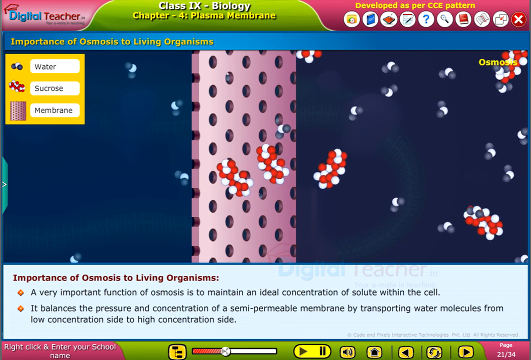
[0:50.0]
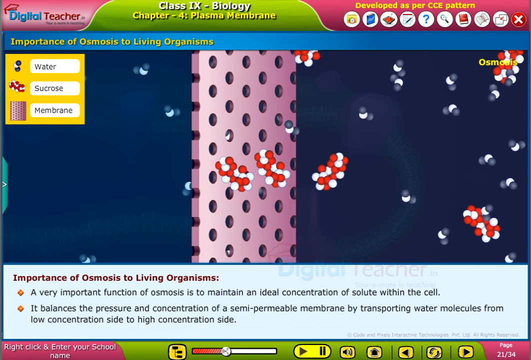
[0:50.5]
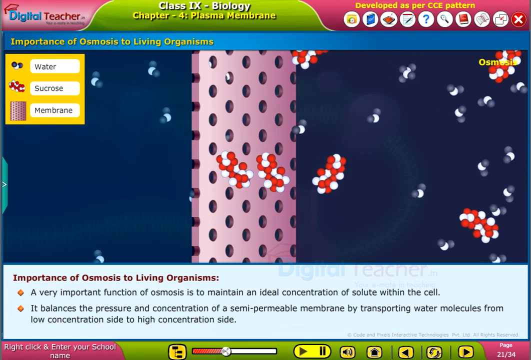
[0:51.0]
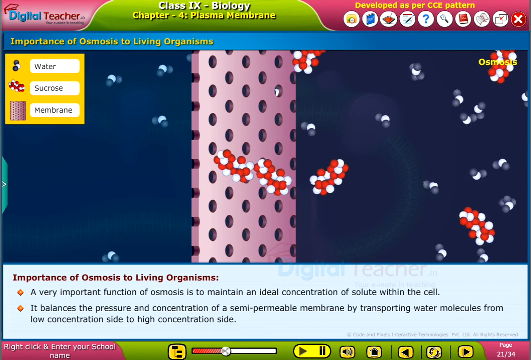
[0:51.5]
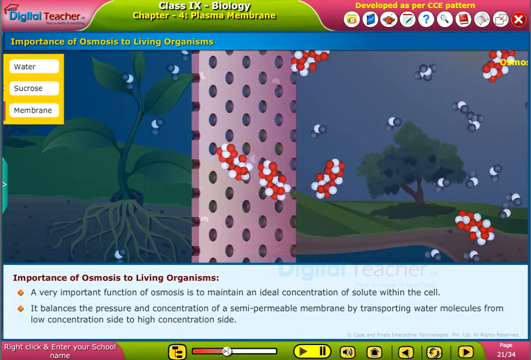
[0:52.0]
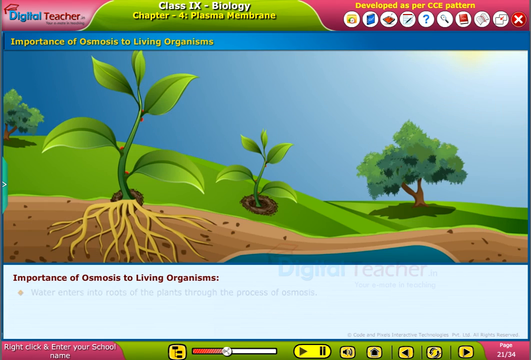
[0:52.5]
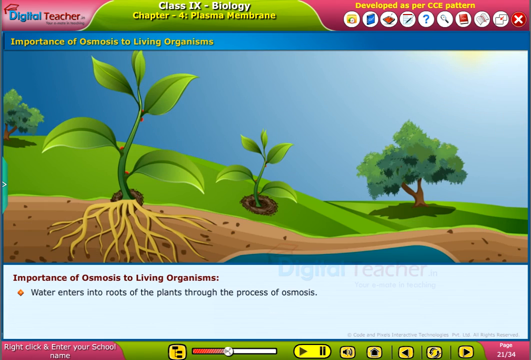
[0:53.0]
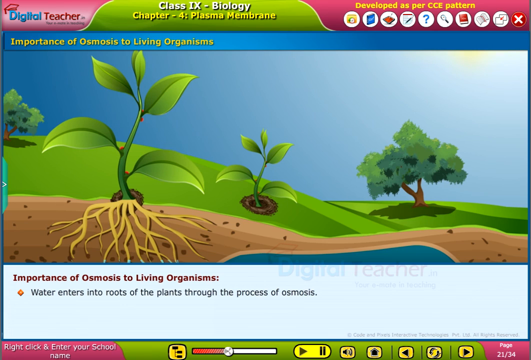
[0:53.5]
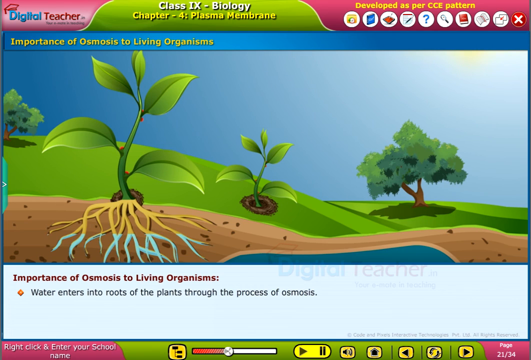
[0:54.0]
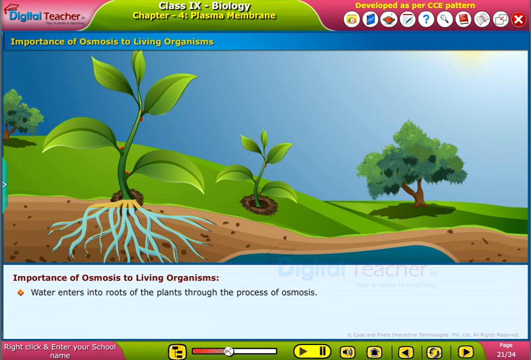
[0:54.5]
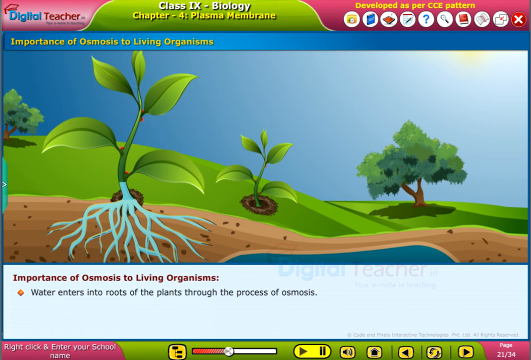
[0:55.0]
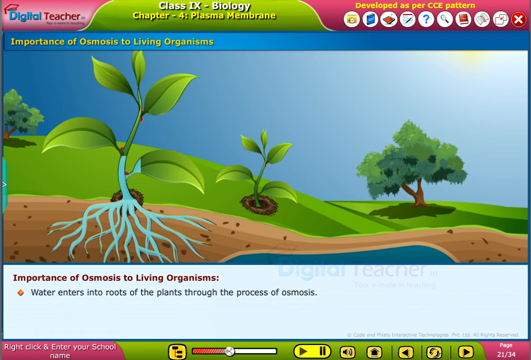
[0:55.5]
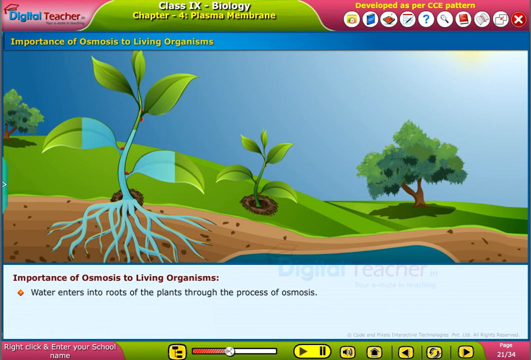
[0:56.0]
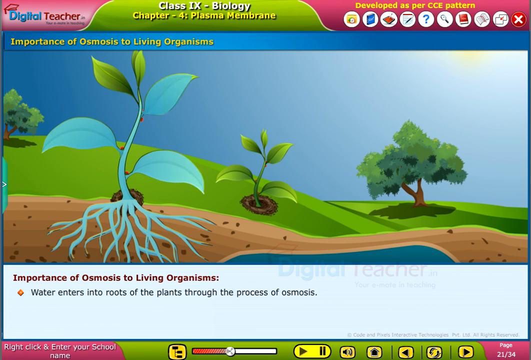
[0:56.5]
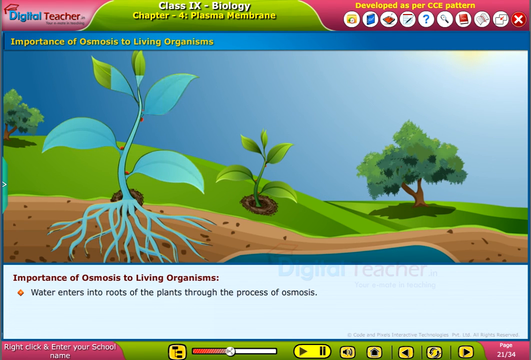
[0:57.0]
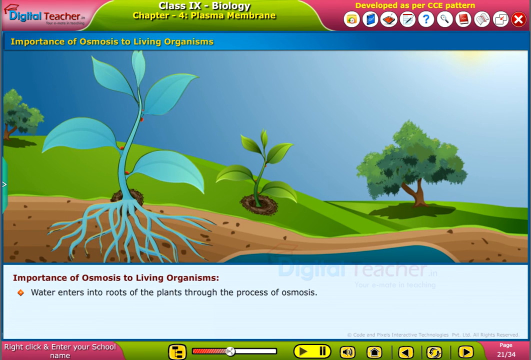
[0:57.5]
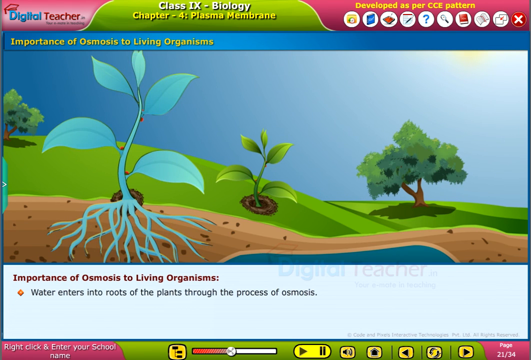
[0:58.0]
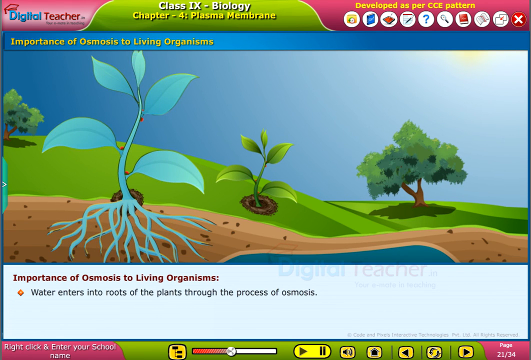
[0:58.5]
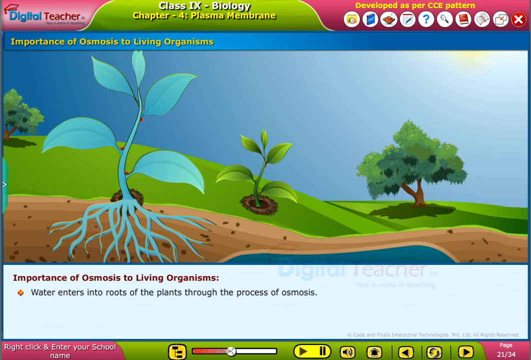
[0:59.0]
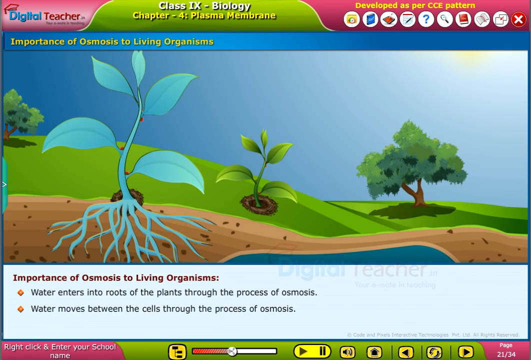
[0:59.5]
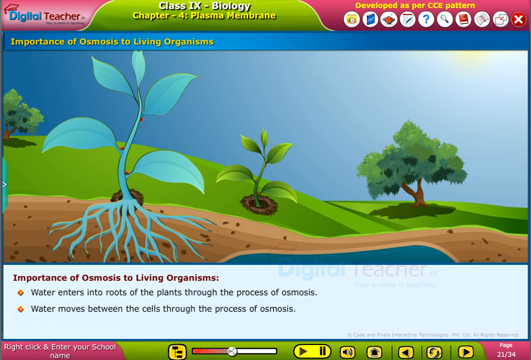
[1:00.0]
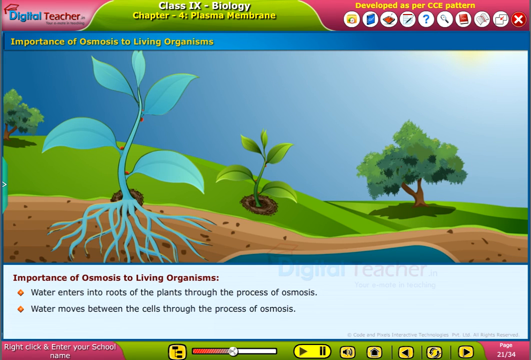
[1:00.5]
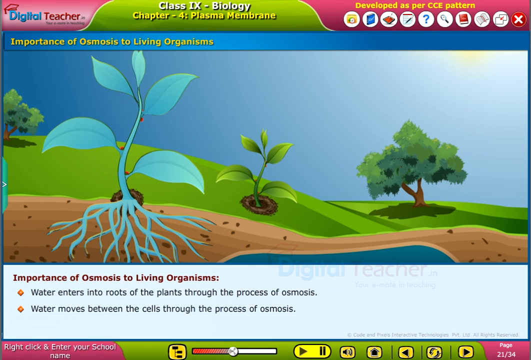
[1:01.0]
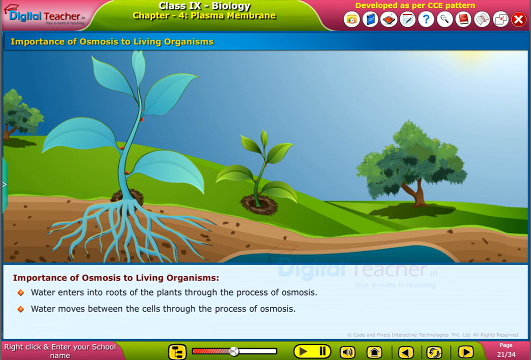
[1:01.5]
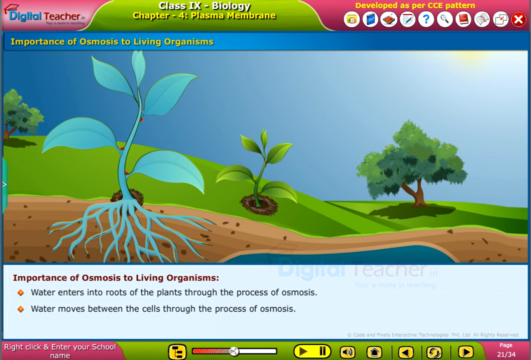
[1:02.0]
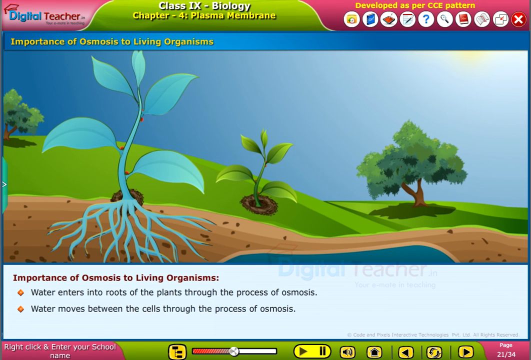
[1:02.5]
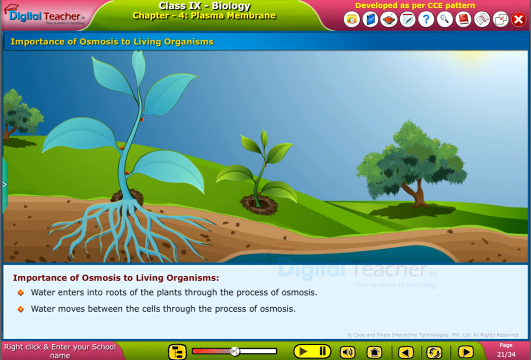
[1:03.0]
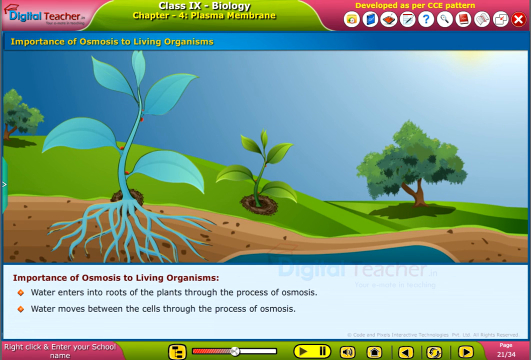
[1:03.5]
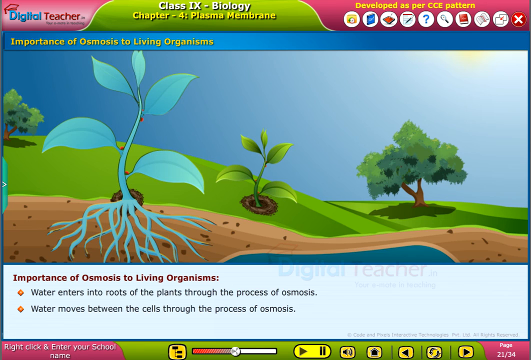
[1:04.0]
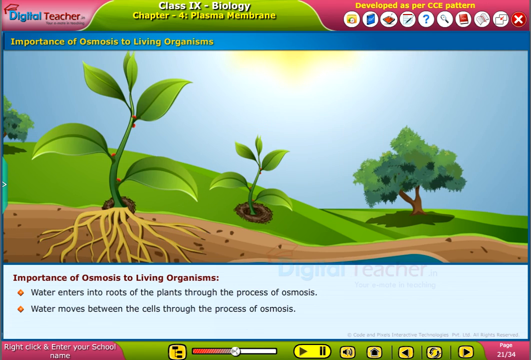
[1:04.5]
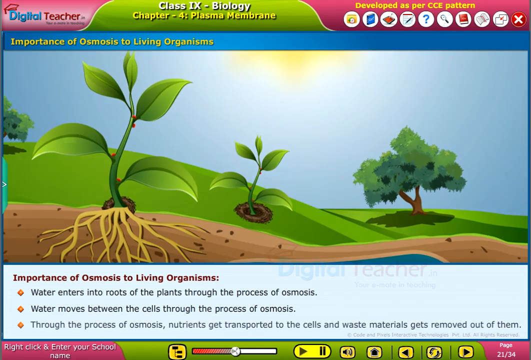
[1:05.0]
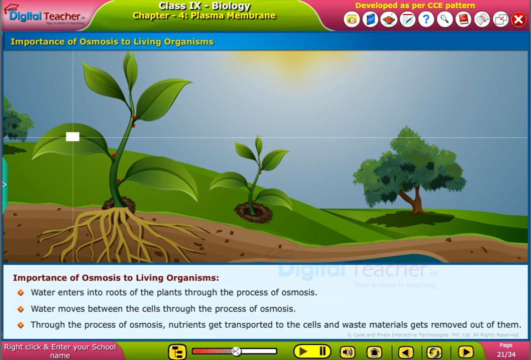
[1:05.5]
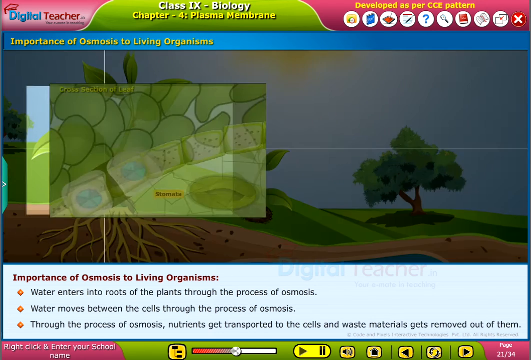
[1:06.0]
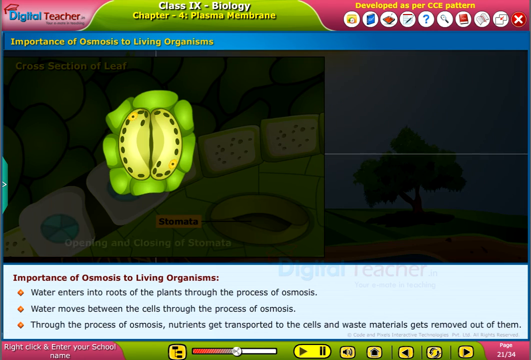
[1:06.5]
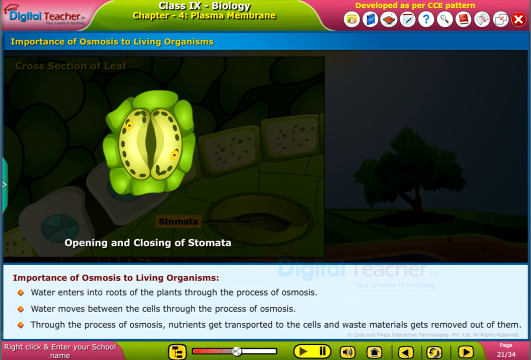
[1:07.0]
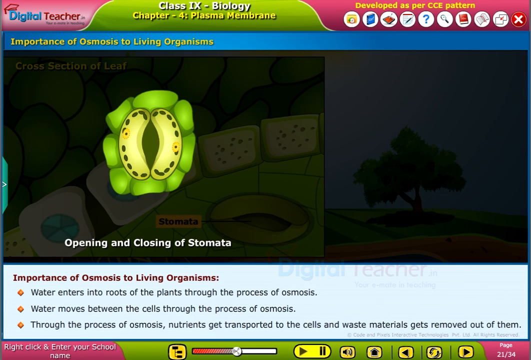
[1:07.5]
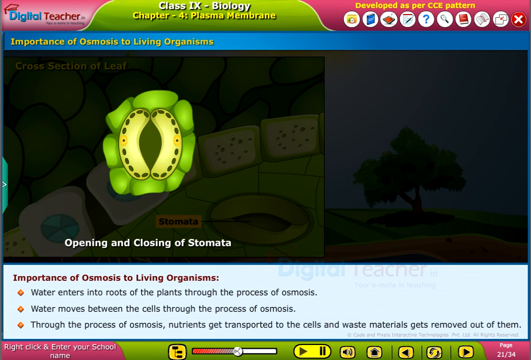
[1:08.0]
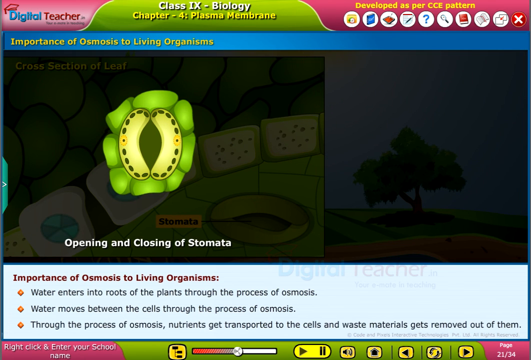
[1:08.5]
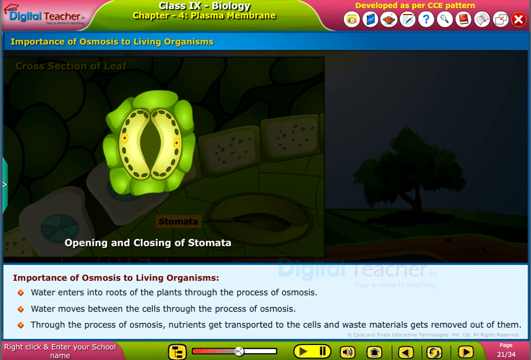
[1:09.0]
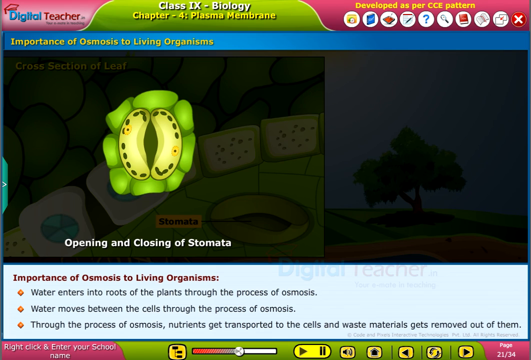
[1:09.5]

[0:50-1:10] The page reads Chapter 4, Plasma Membrane, Class IX biology, developed as per CCE pattern. The pink sponge-like membrane is in the center, with sucrose passing through it and becoming water. A section on the importance of osmosis to living organisms shows plants in a field with green grass. One plant shows water entering its roots through osmosis and moving through the plant cells. Next comes the opening and closing of the stomata: a stoma looks like a kidney split in half with green cloves surrounding it. The cells show how nutrients are transported into them. The stoma has a green hole in it and is surrounded by other plant cells that look like speckled sponges throughout the plant.